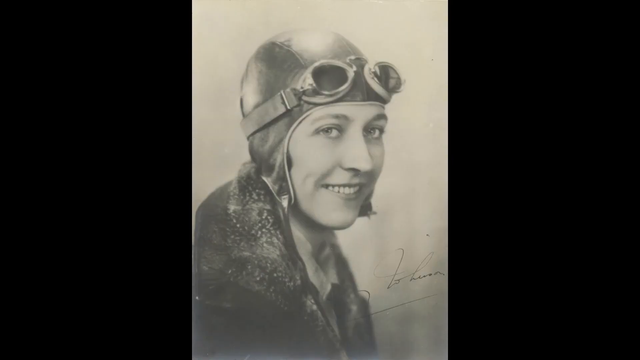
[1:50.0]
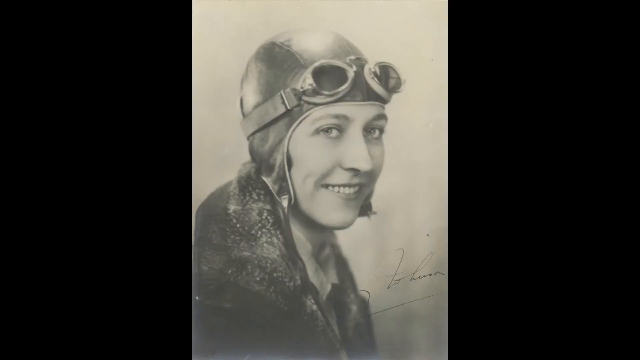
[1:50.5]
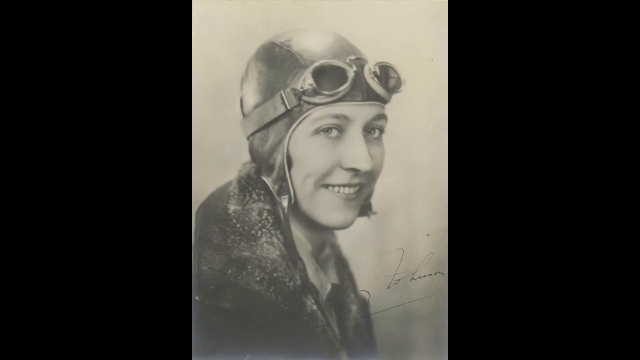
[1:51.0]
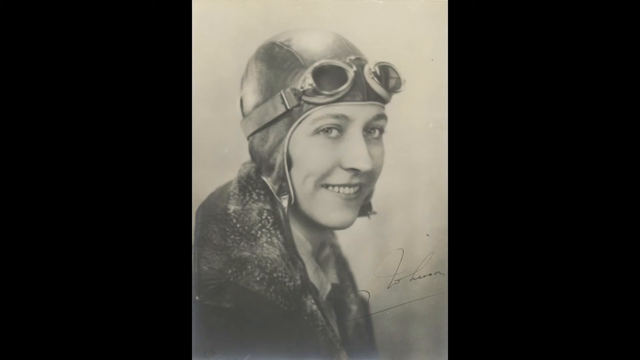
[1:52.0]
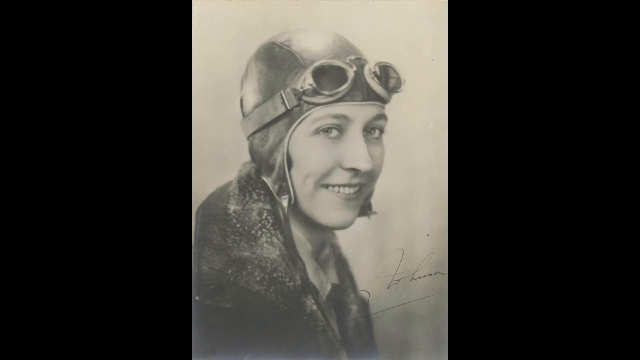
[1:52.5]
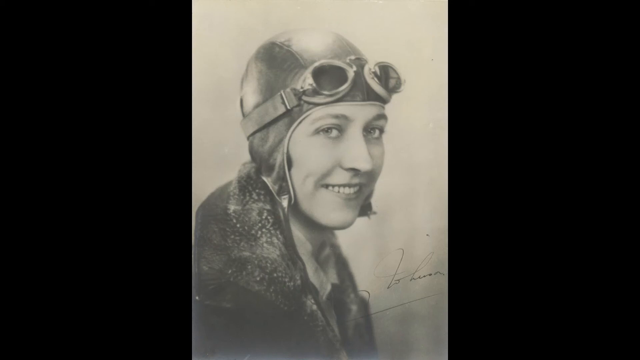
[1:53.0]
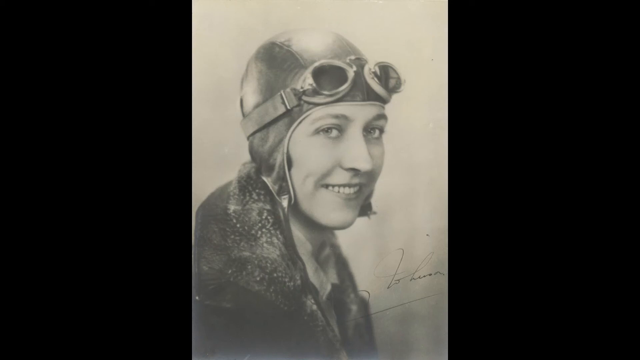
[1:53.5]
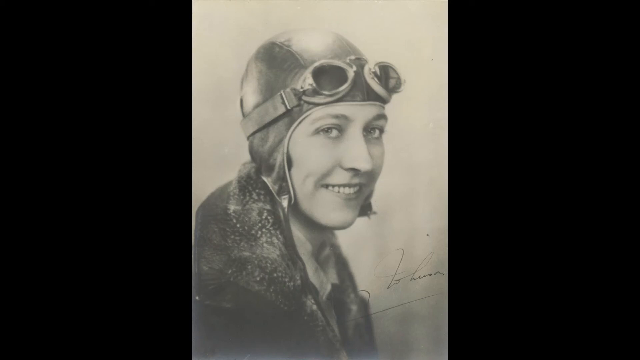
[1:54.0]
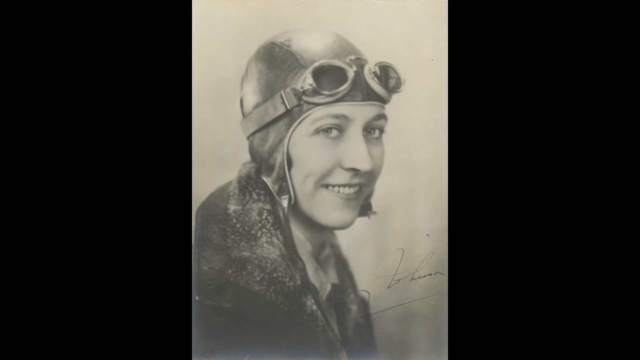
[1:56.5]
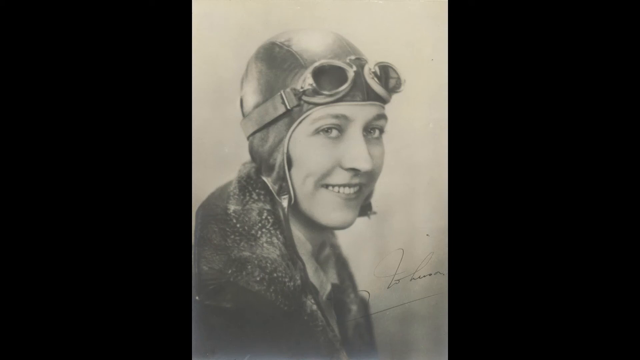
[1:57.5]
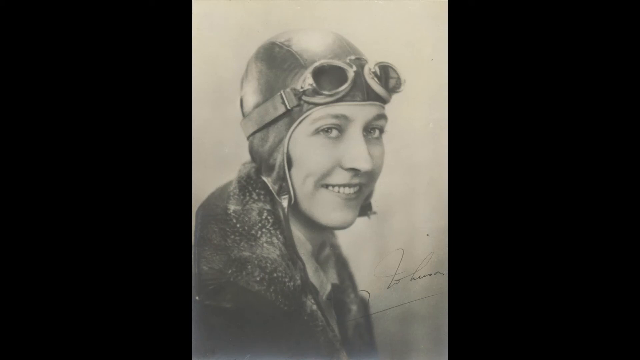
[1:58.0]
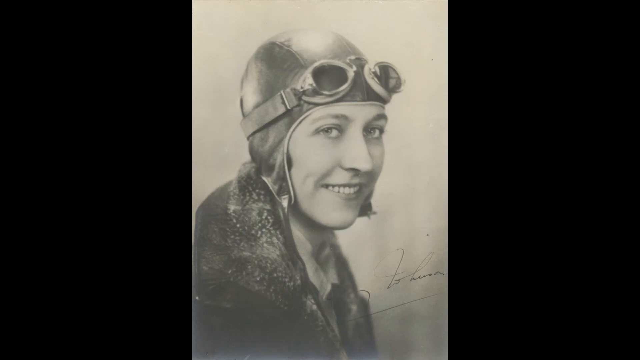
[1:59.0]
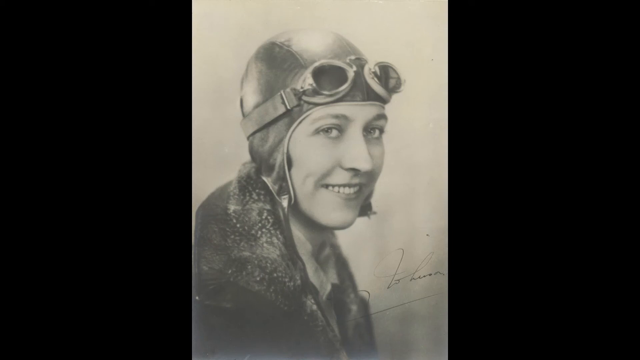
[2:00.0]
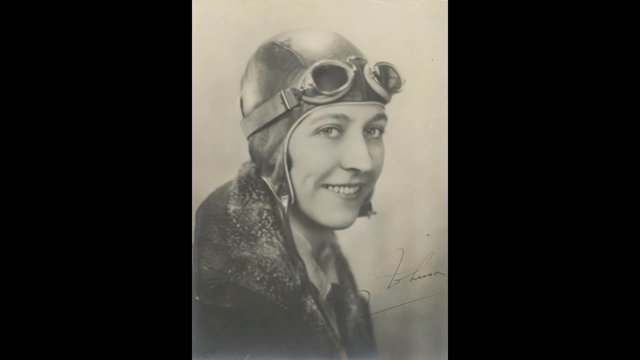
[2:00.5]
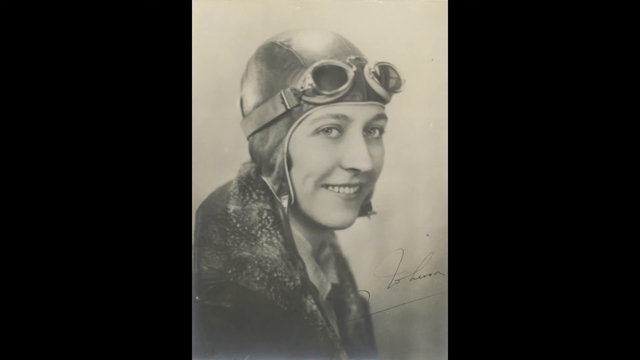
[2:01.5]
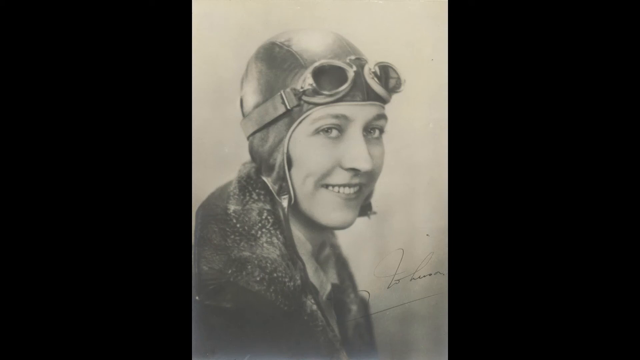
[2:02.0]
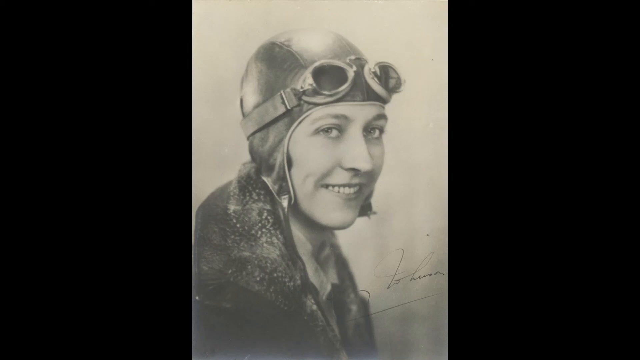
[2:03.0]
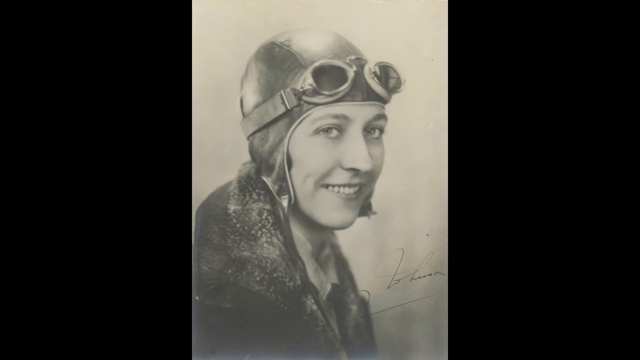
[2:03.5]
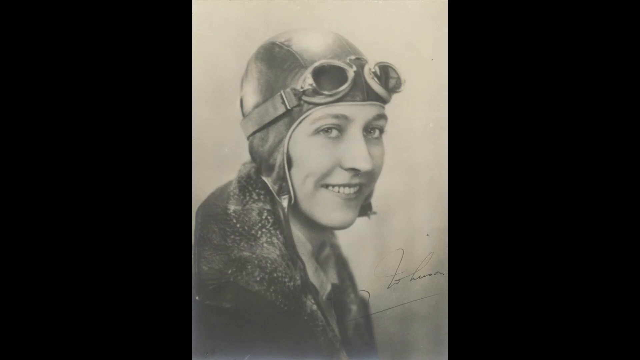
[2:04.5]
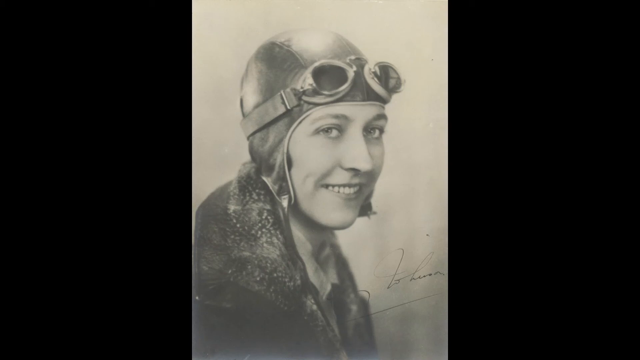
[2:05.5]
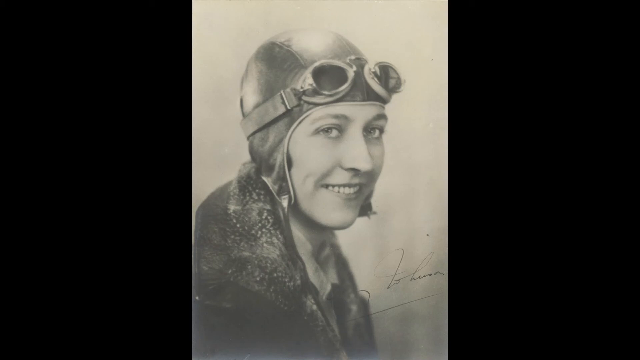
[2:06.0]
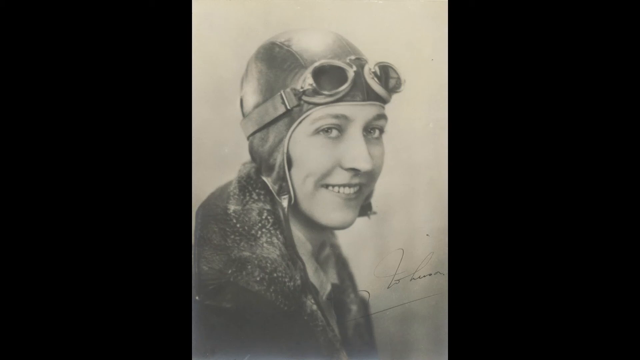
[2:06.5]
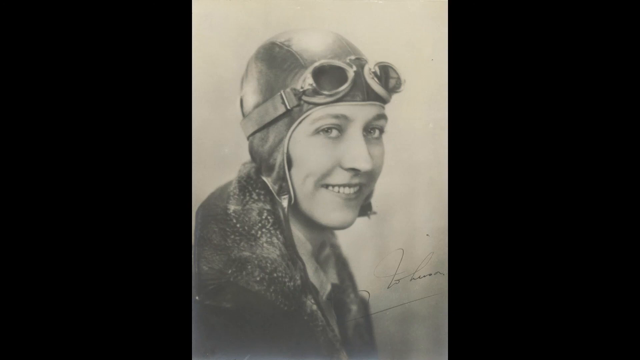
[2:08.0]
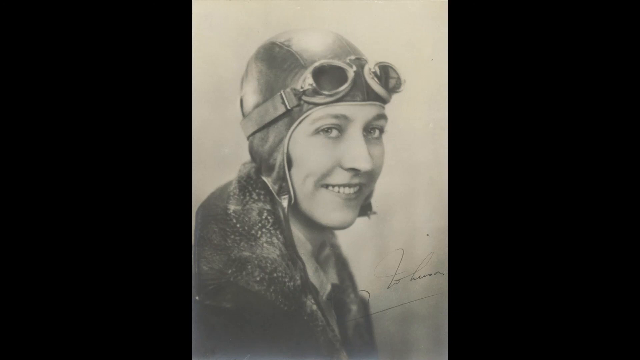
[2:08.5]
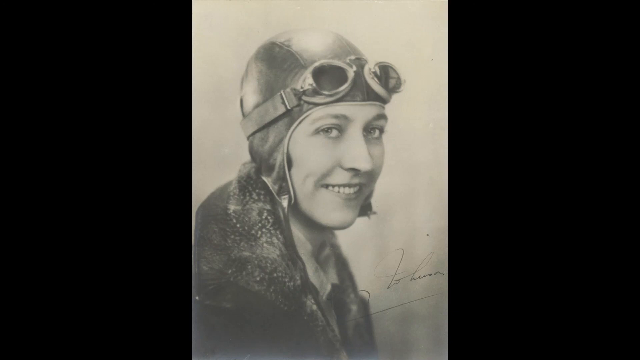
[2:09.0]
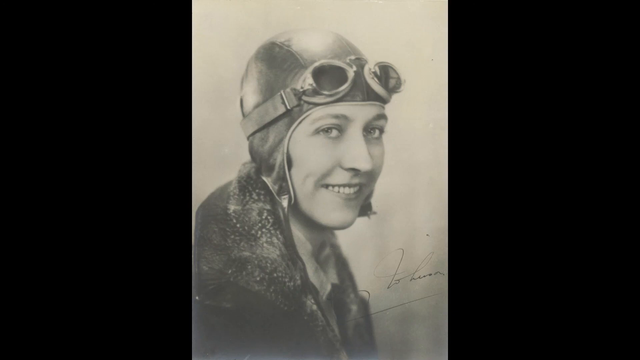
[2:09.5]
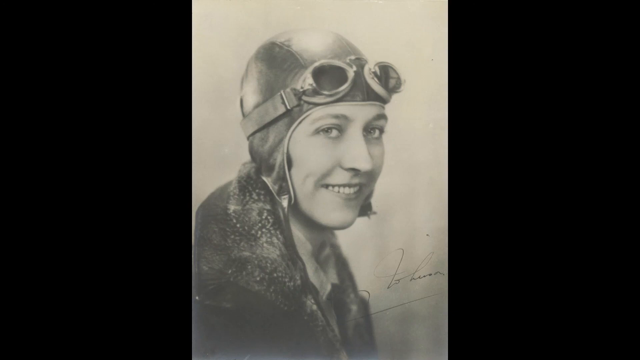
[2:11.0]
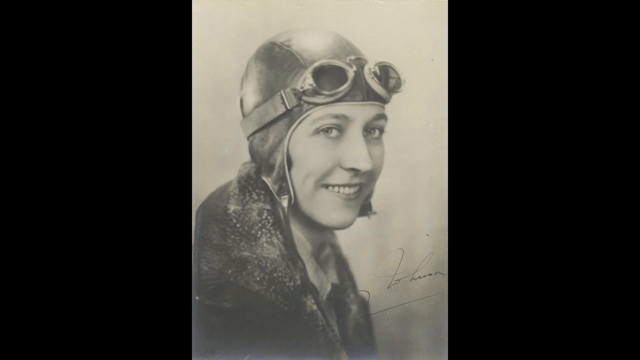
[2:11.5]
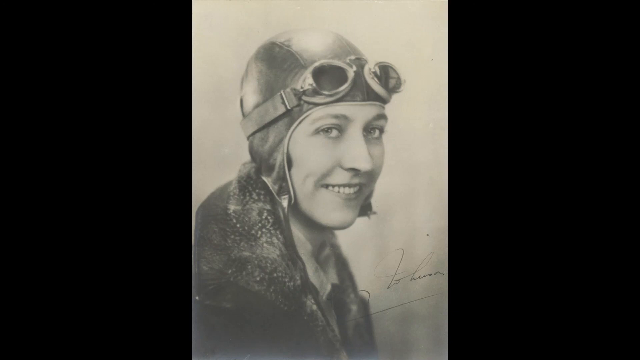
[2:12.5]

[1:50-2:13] A picture shows perhaps a female pilot, perhaps Amelia Earhart, with a hard-to-read cursive signature beside her name. She smiles at the camera with her top row of teeth visible. She wears an old-style pilot's head strap covering her ears, with goggles strapped on the top of her head, and a thick black coat, under which she seems to be wearing a white collared shirt.